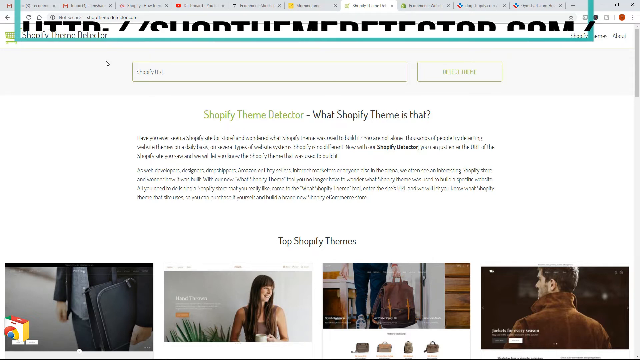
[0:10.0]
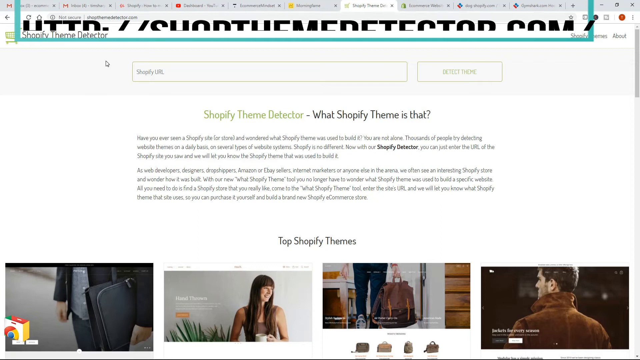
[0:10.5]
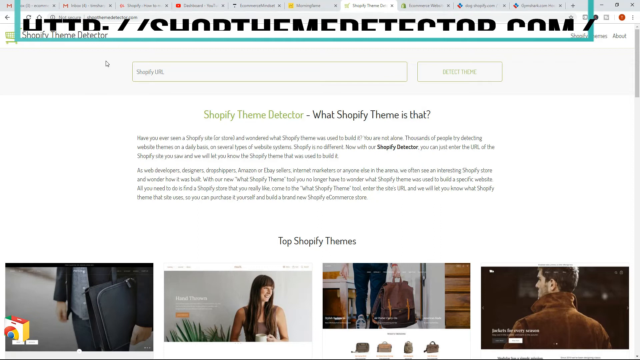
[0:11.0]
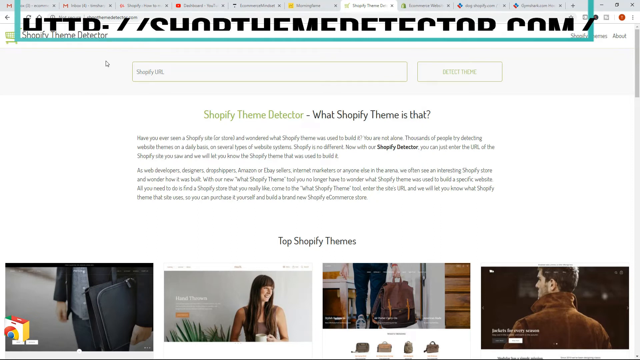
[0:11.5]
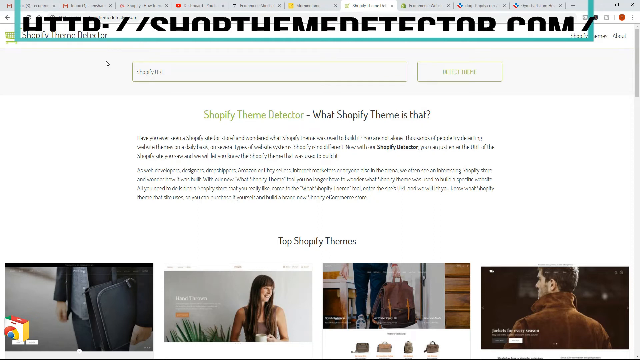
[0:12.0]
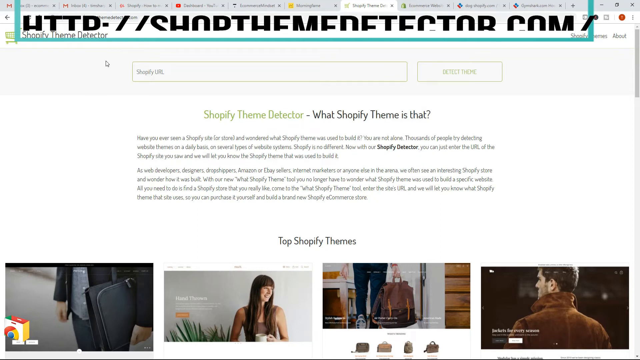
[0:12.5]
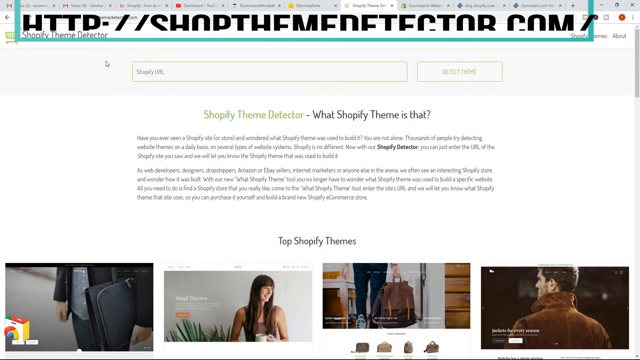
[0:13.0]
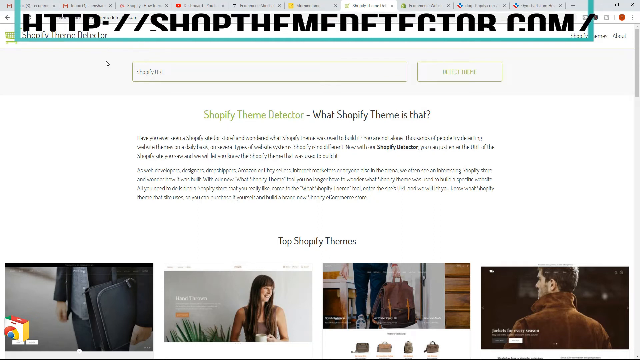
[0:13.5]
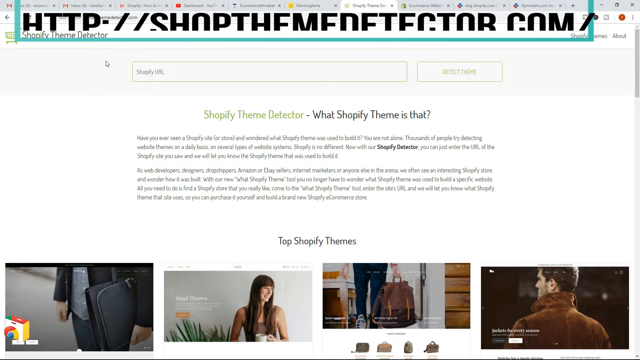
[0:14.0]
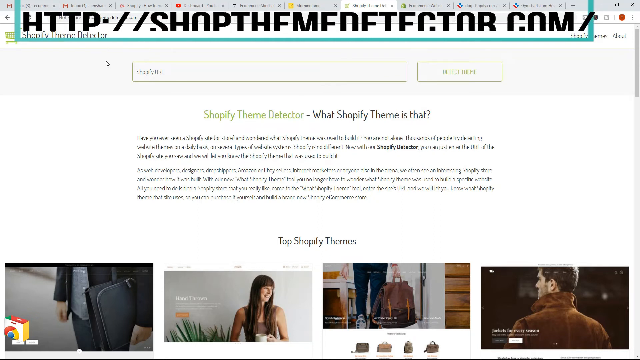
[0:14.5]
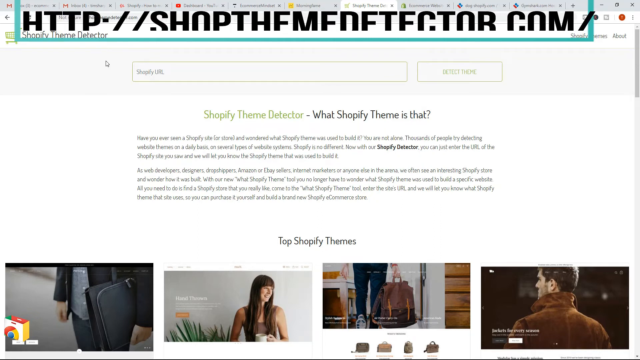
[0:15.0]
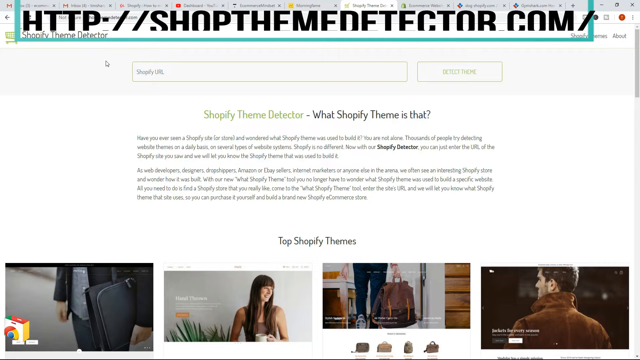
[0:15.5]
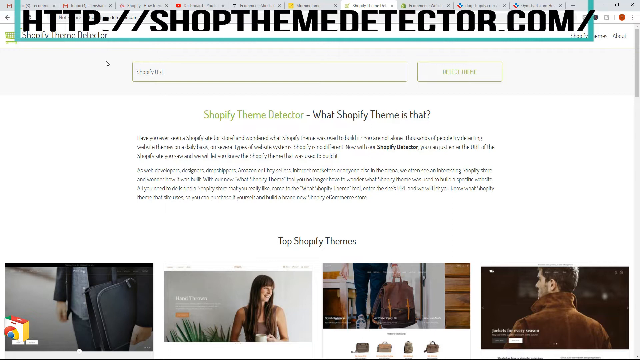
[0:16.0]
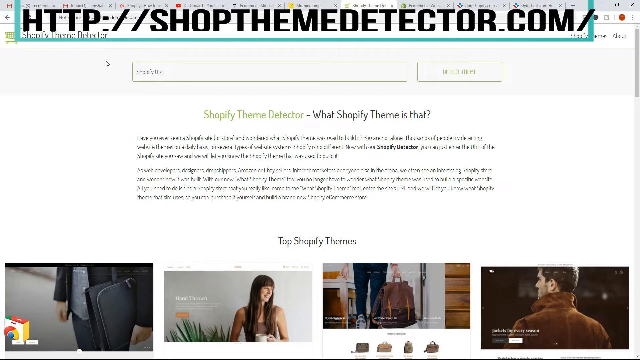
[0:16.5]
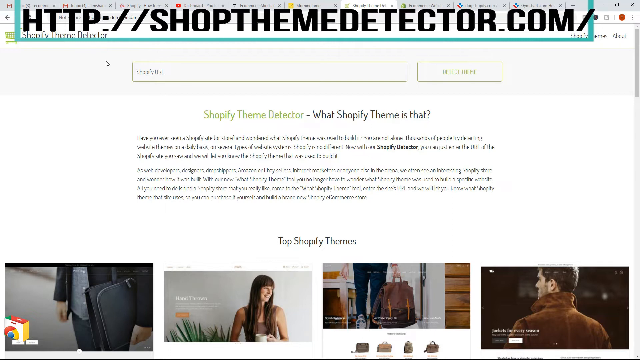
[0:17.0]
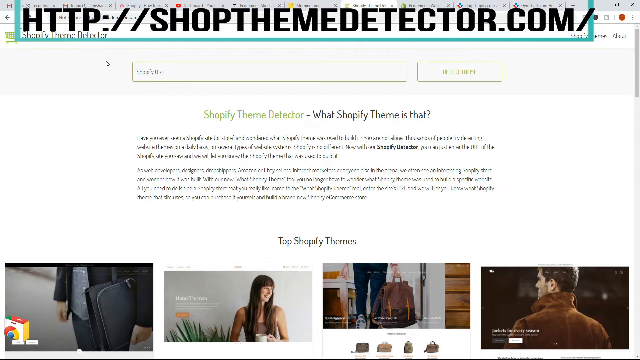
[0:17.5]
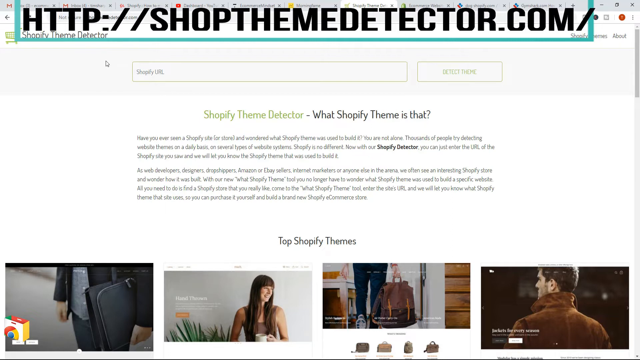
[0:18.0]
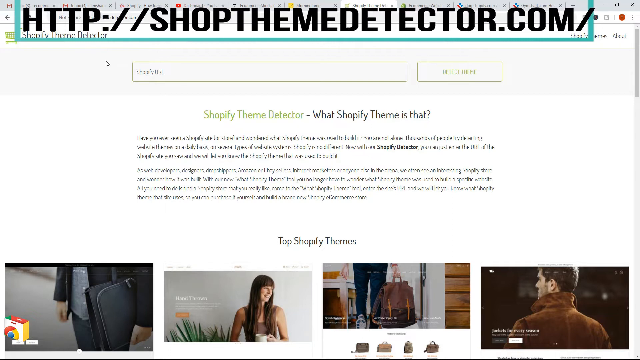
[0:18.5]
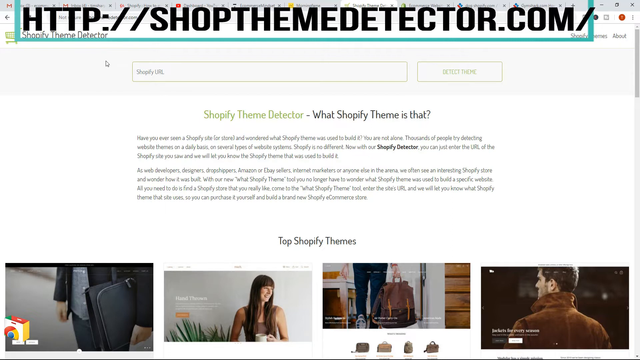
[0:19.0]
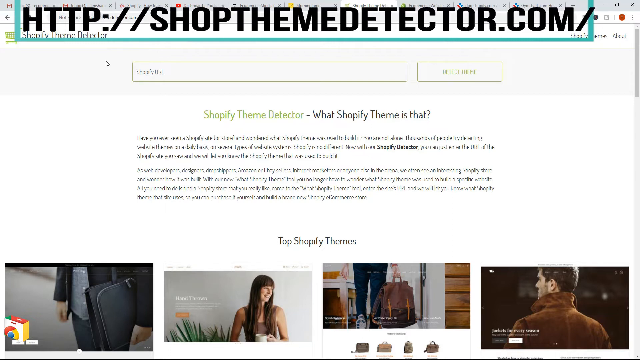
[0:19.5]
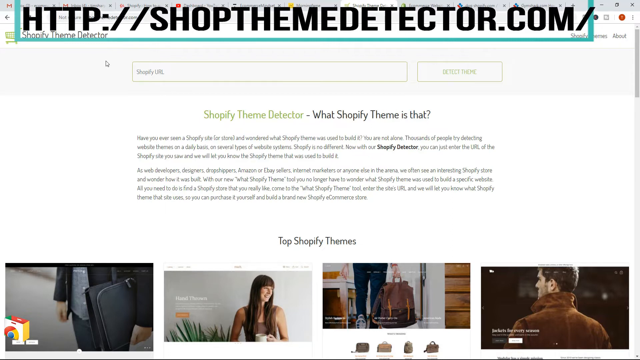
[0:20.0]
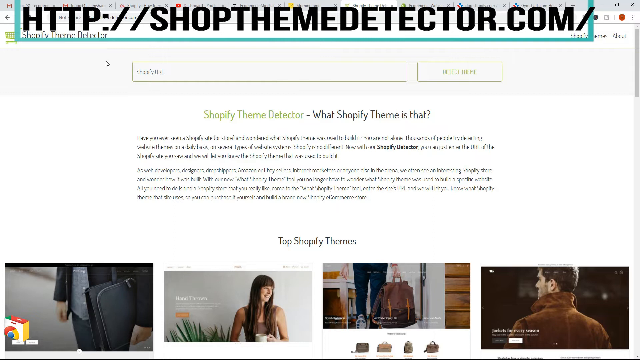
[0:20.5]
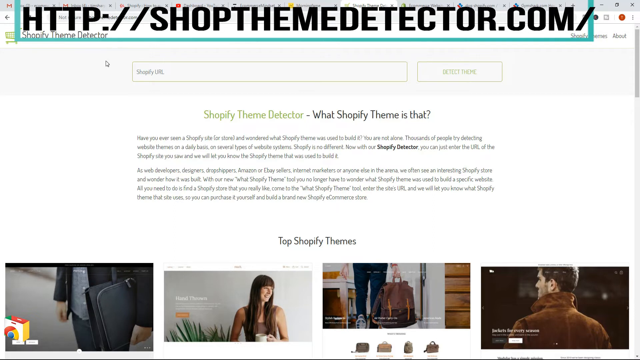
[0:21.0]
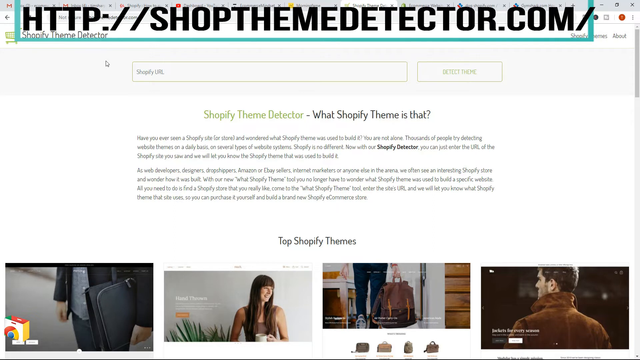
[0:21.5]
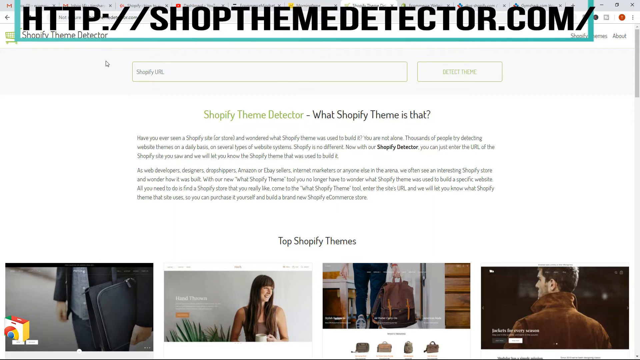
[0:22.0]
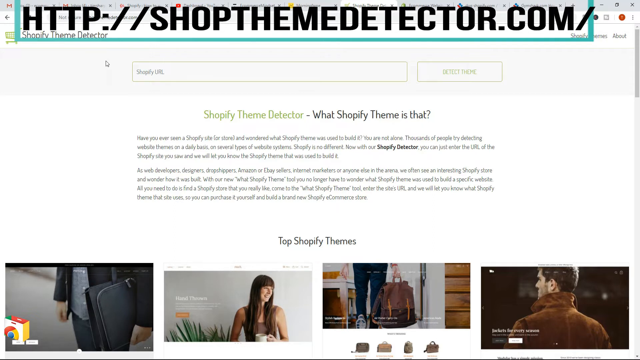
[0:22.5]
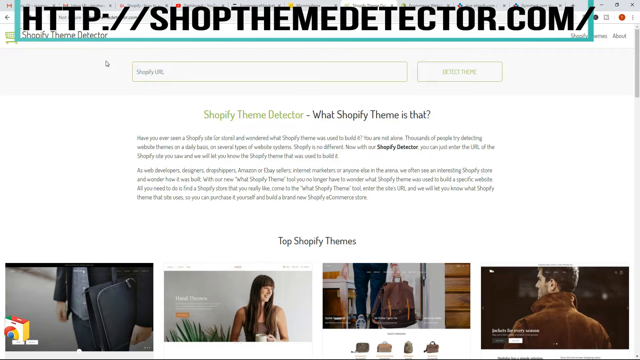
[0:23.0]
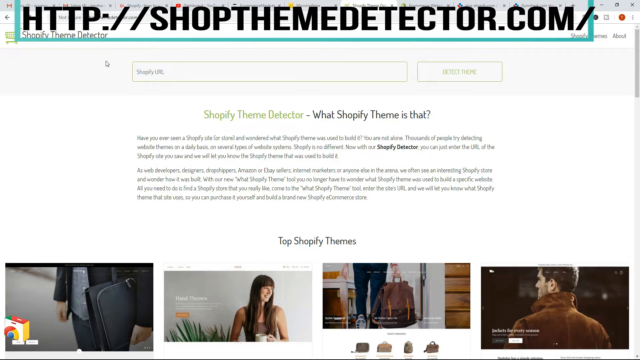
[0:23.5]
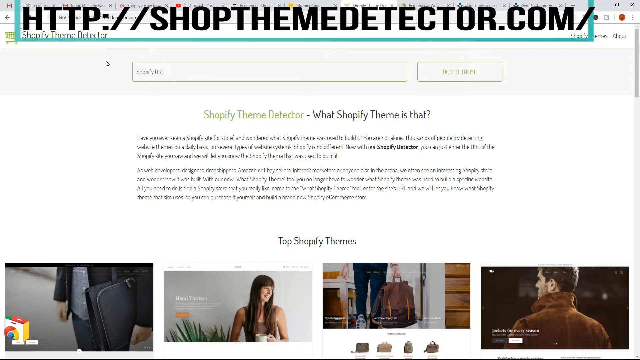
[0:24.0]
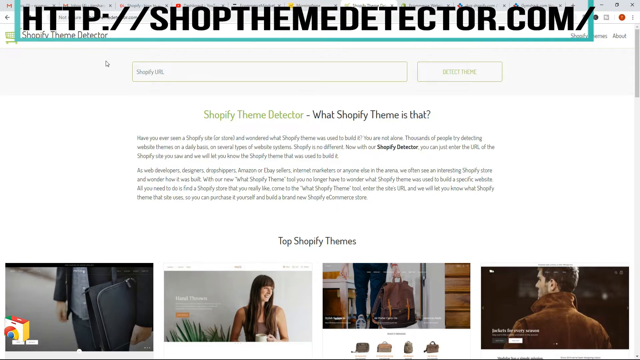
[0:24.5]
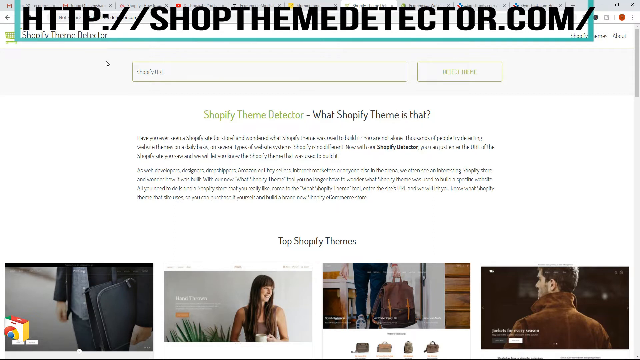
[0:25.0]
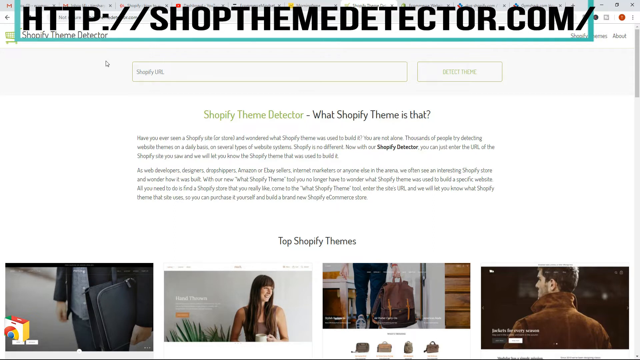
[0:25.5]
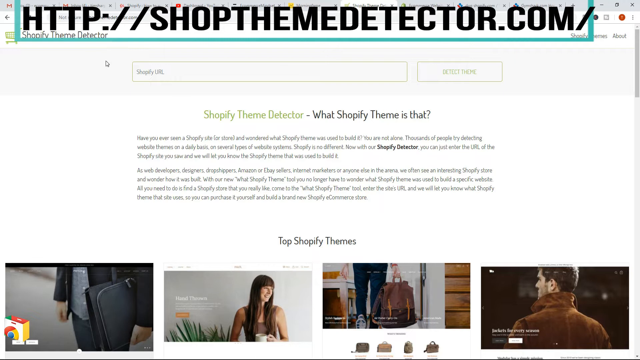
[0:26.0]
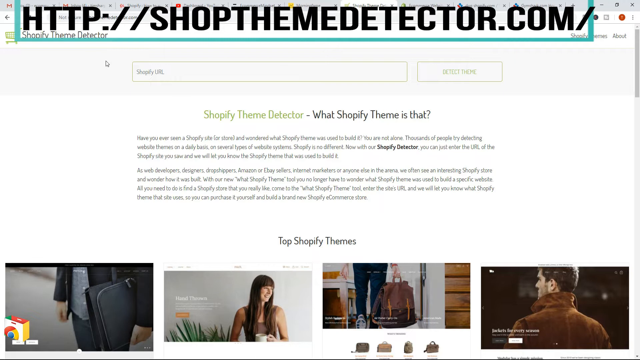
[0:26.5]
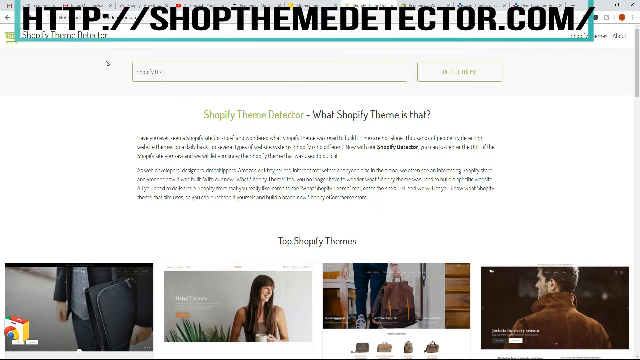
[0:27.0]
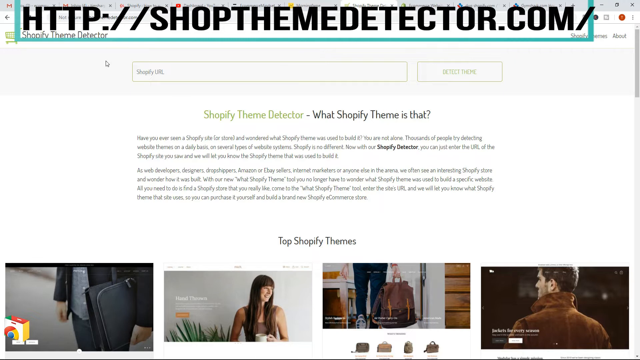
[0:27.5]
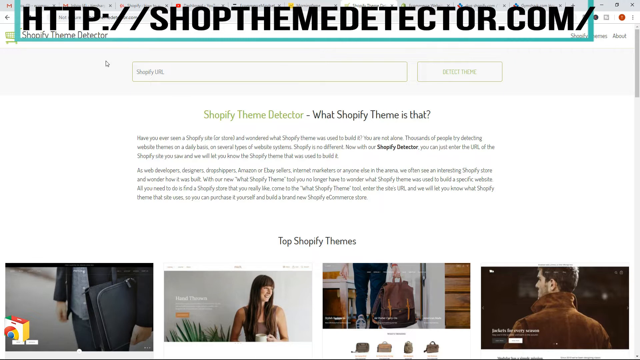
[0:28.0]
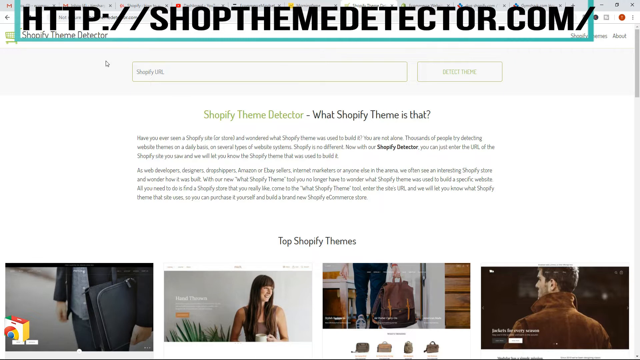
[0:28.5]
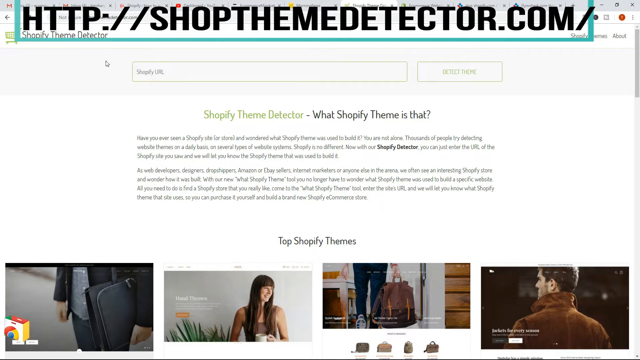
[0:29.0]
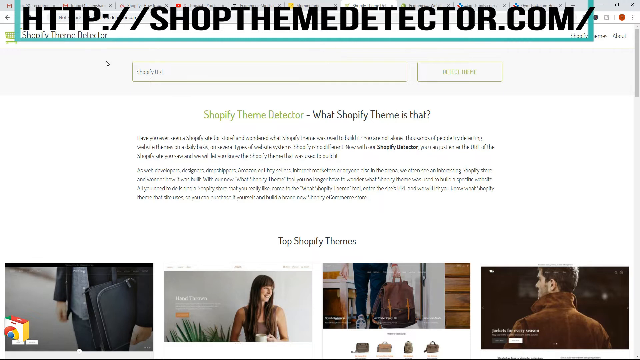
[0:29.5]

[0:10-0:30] The Shopify Theme Detector site, shopthemedetector.com, is shown; it is a secure site. Top Shopify themes are shown below, and briefcases, clothing, luggage and coats appear to be among the top themes.